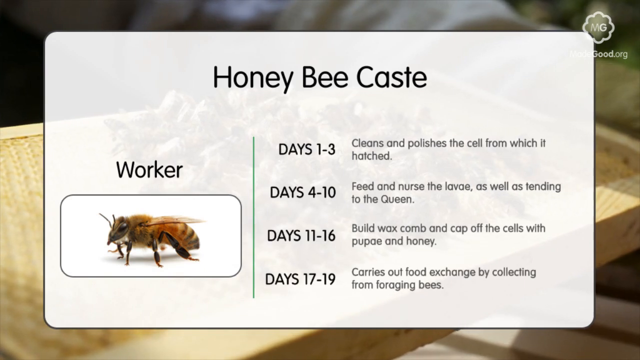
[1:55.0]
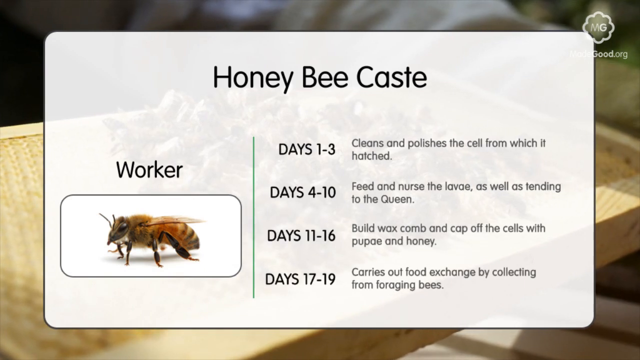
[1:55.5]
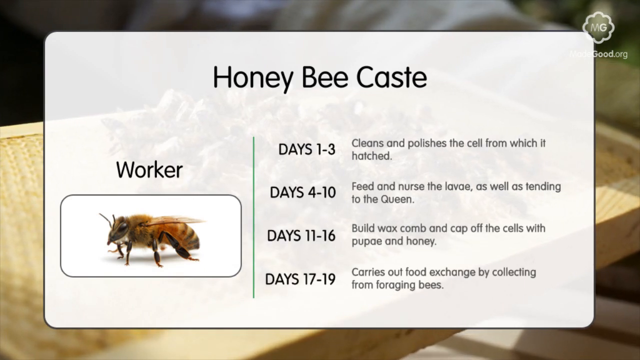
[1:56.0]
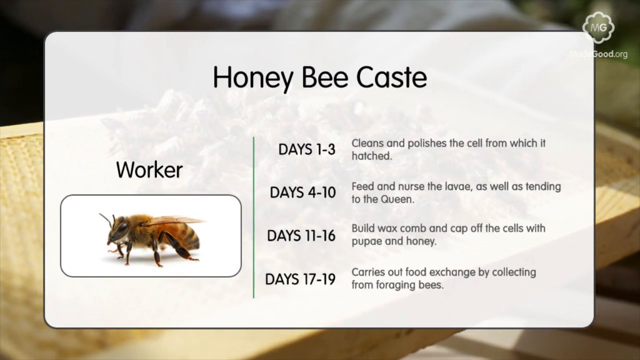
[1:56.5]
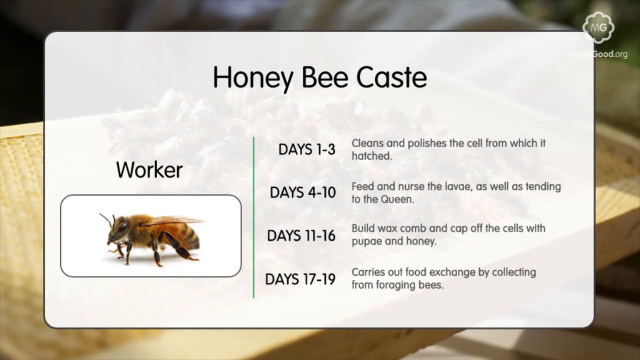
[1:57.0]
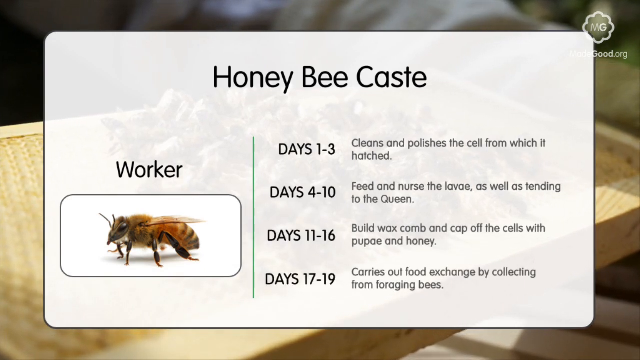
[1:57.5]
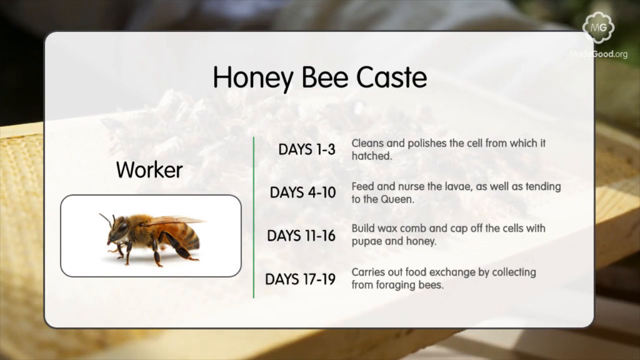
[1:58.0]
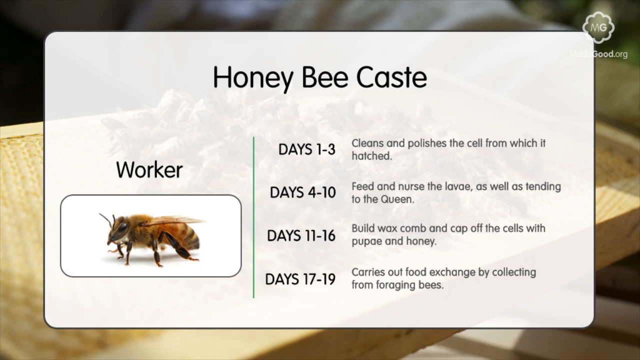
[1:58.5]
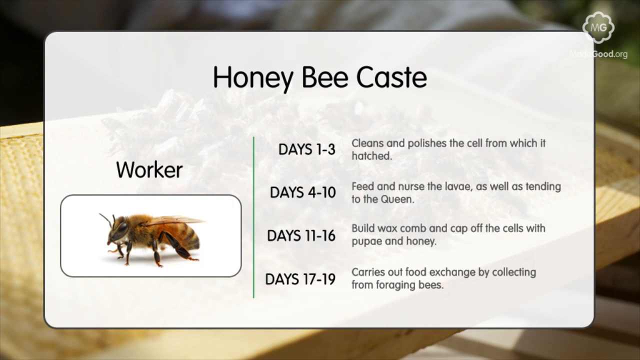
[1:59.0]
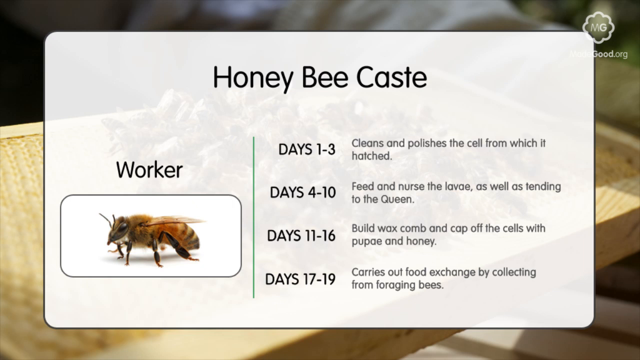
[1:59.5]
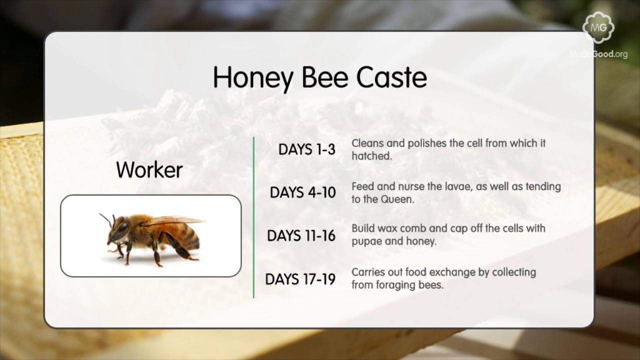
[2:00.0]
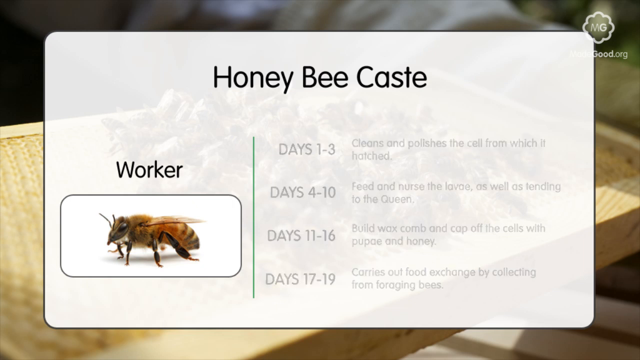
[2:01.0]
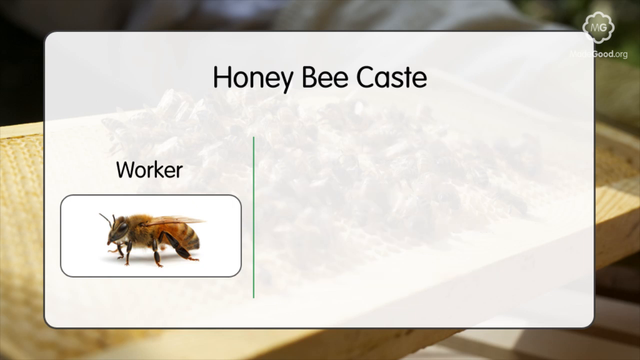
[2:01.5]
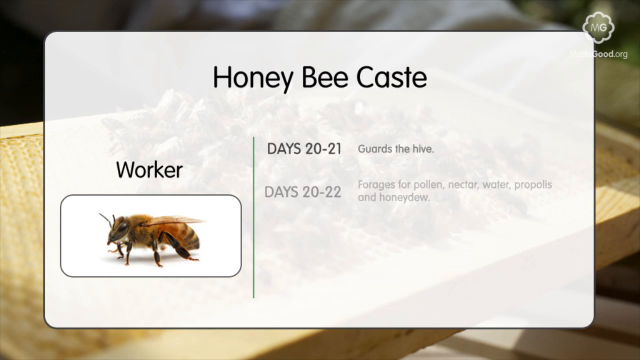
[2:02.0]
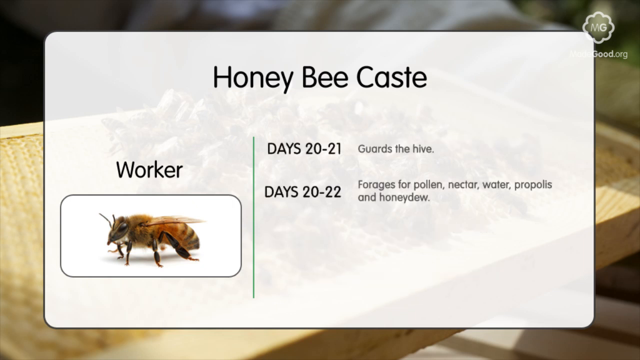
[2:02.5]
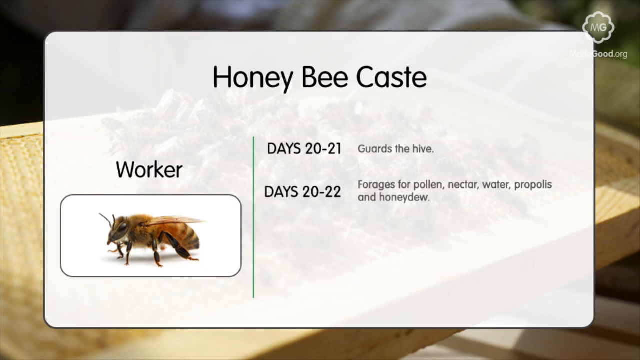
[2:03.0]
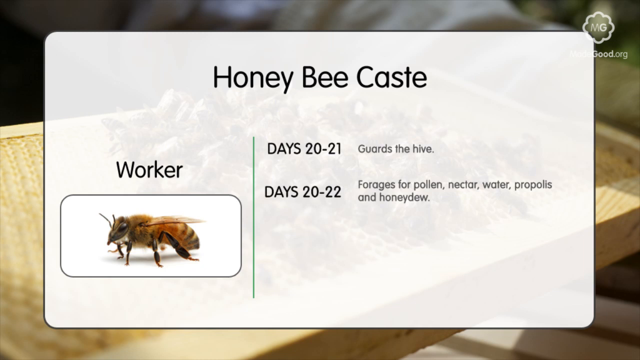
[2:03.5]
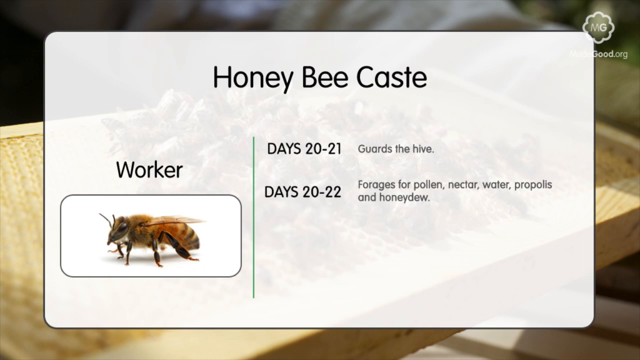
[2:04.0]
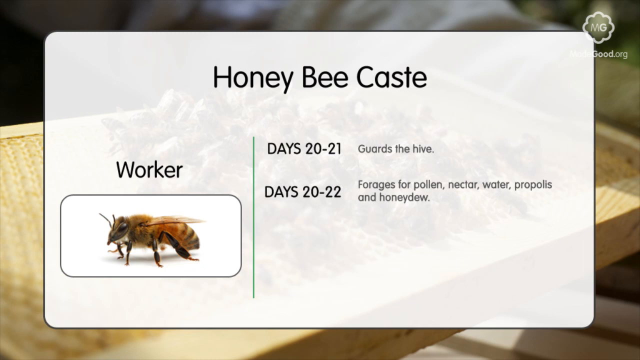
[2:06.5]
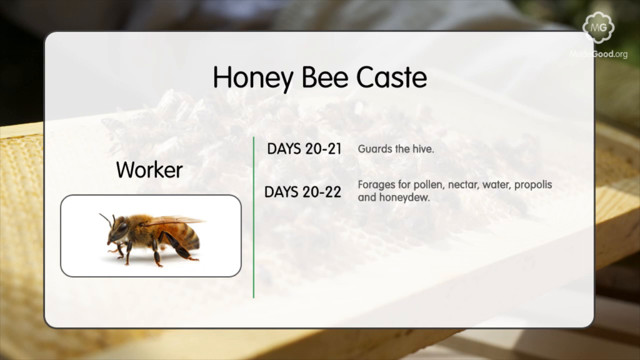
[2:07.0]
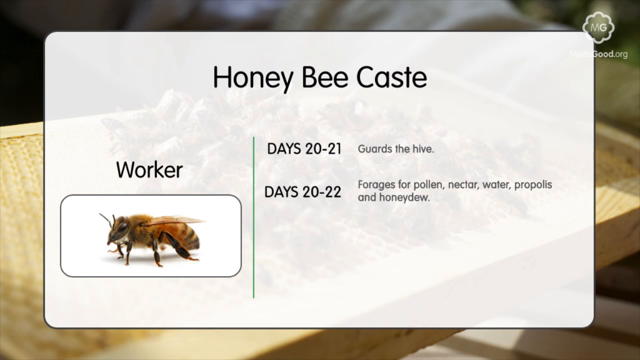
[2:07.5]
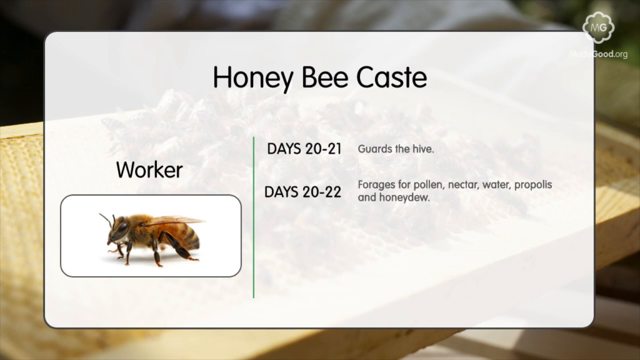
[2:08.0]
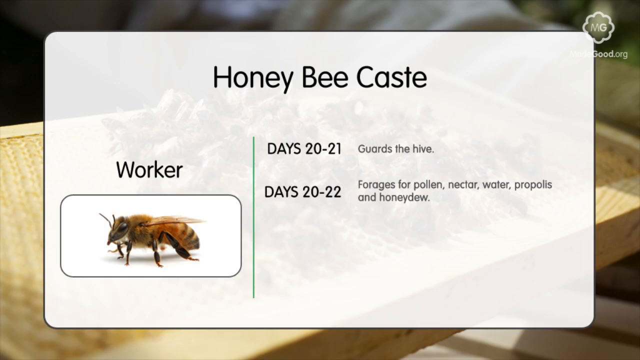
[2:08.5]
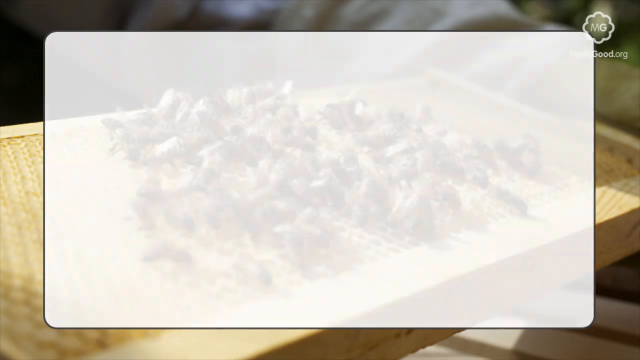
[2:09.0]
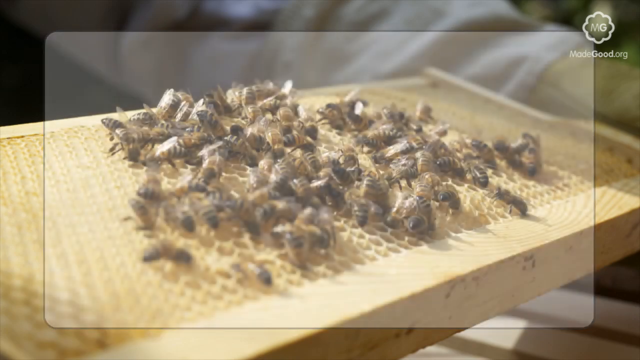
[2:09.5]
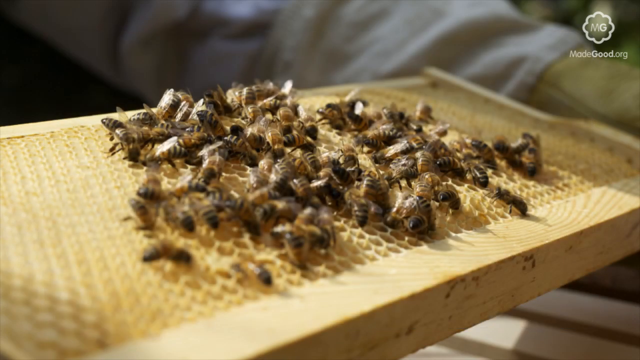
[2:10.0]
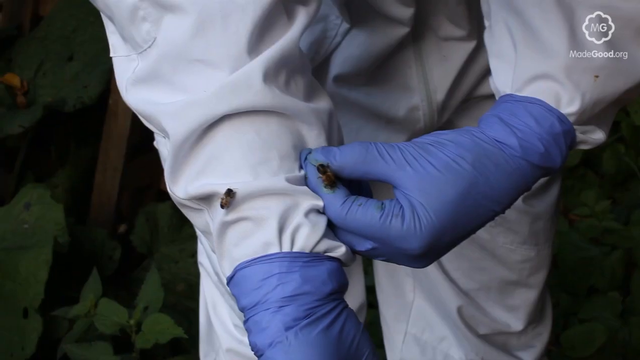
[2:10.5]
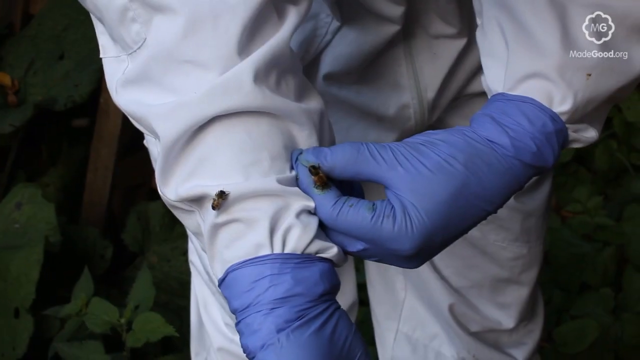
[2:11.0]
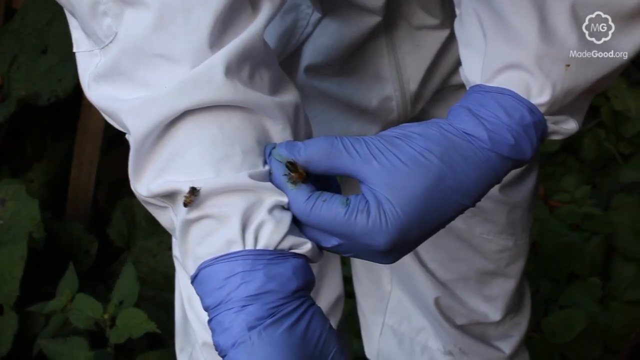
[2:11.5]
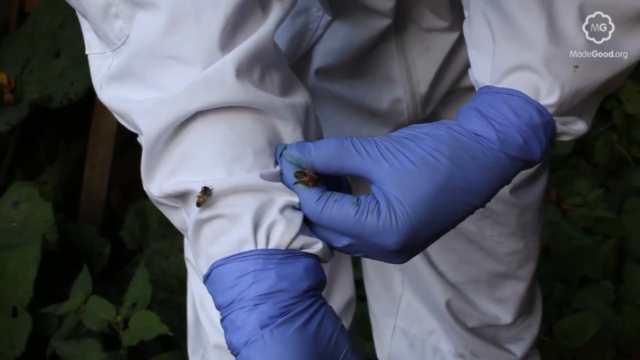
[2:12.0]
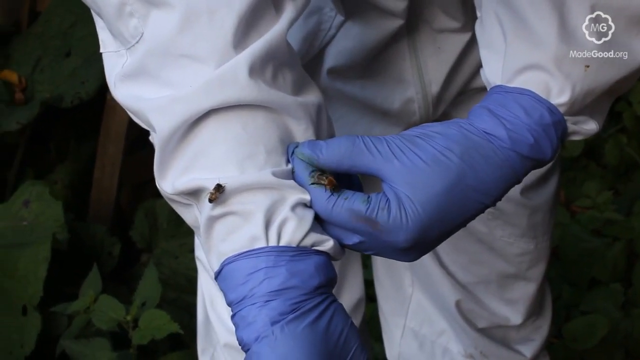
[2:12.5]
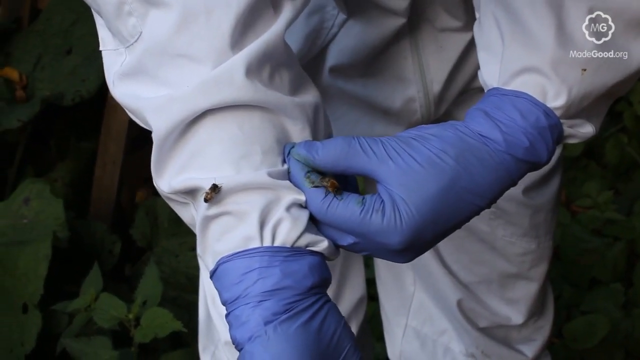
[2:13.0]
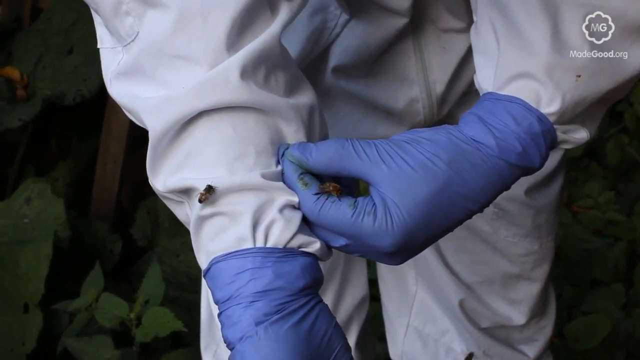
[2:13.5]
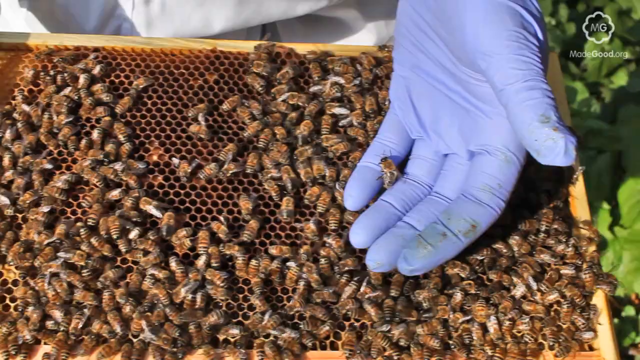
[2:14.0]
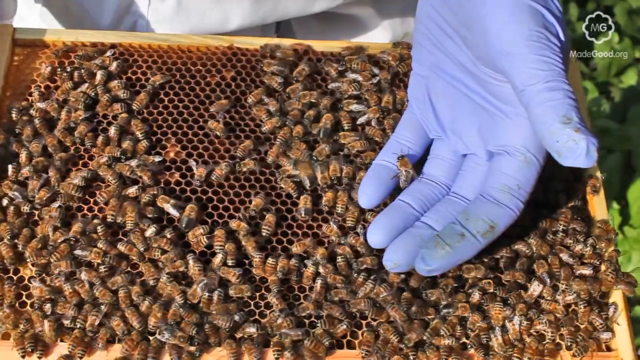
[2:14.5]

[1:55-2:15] The worker bee graphic labeled "honeybee cast" shows a series of days, then the page changes to "days 20-21", which says it guards the hive, and "days 20-22", when it forages for pollen, nectar, water and honeydew. Next, a couple of bees are on a person wearing a white full body suit that appears to have a zipper, along with purple gloves. One bee is centered on the person's arm and another crawls on their purple glove. The video then changes to a center box with many bees swarming or crawling on it, and one bee crawls on the person's purple glove, which appears to have some dirt on it.